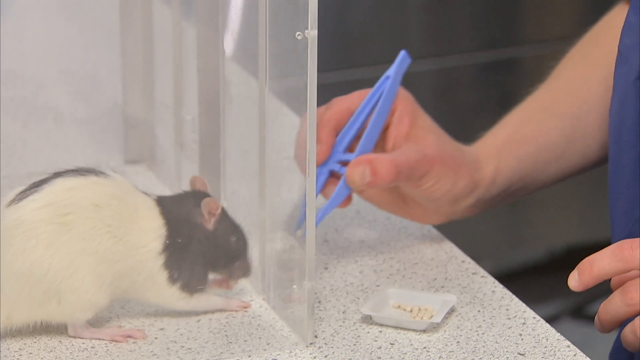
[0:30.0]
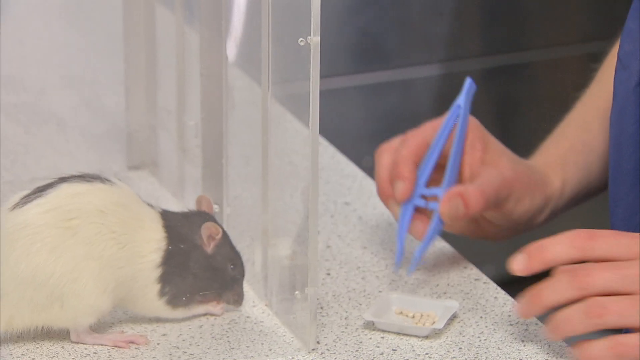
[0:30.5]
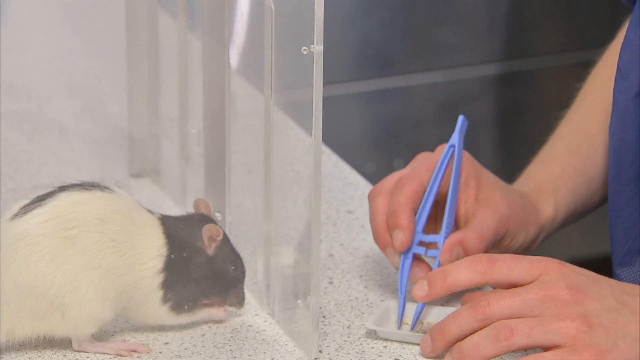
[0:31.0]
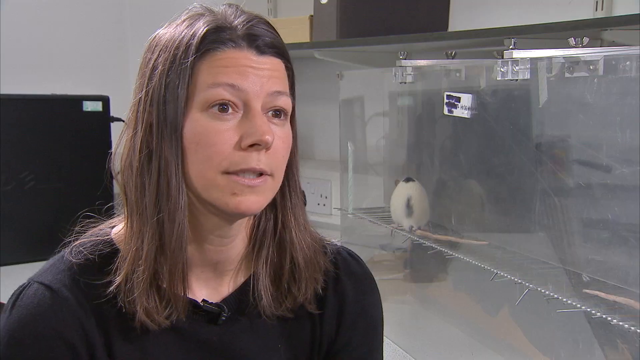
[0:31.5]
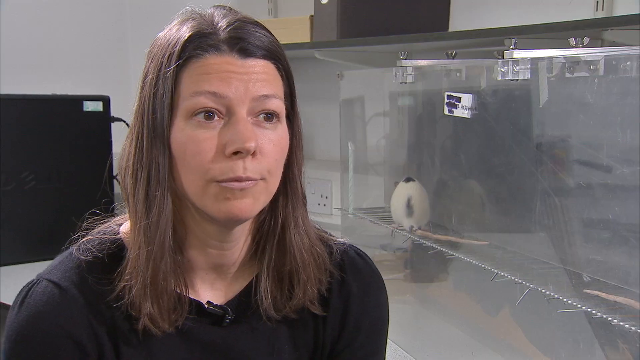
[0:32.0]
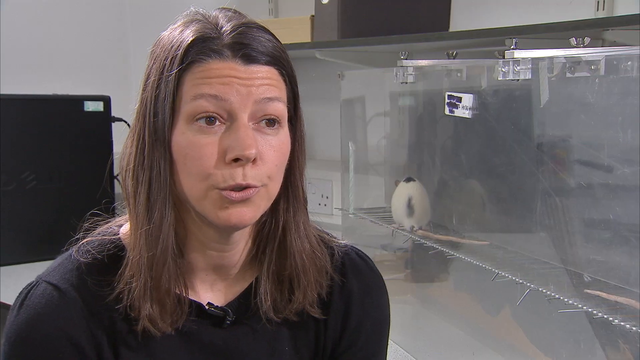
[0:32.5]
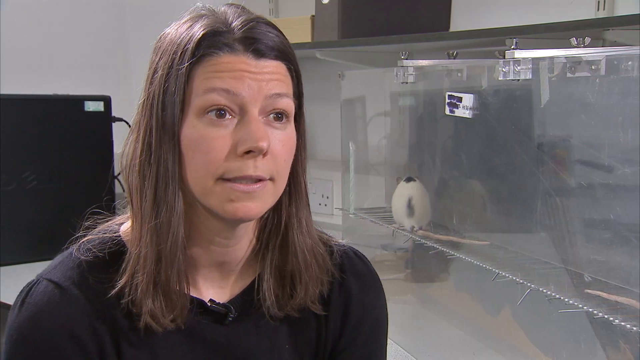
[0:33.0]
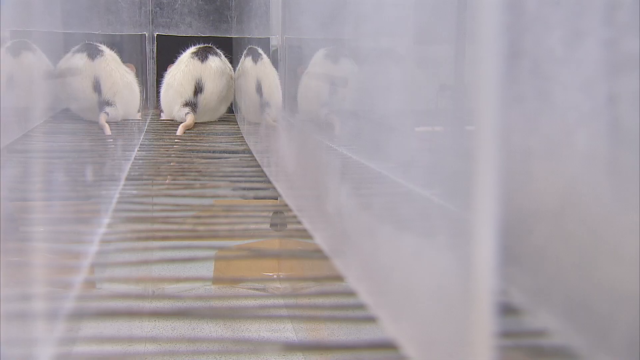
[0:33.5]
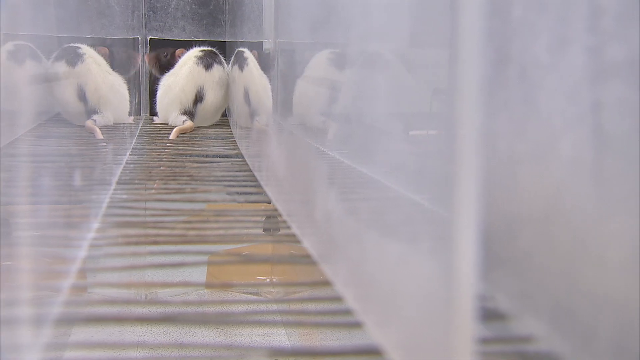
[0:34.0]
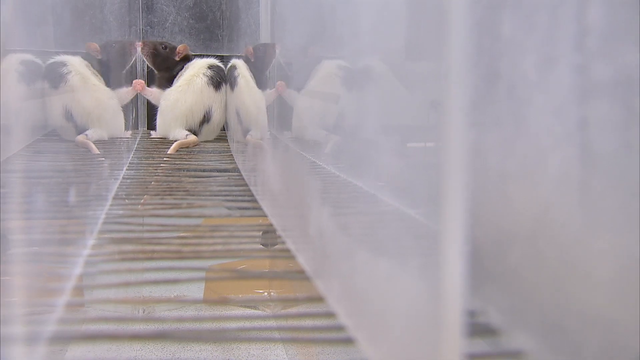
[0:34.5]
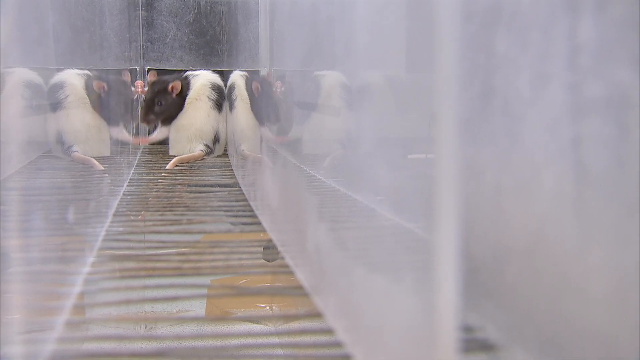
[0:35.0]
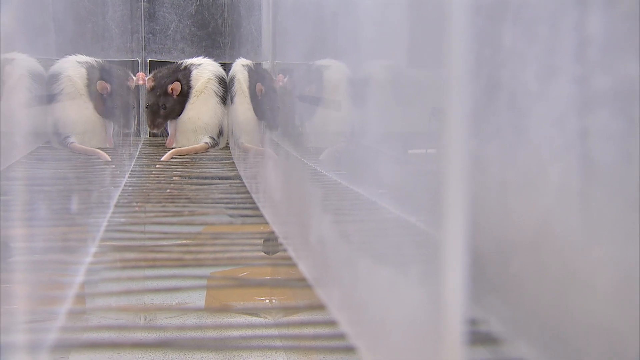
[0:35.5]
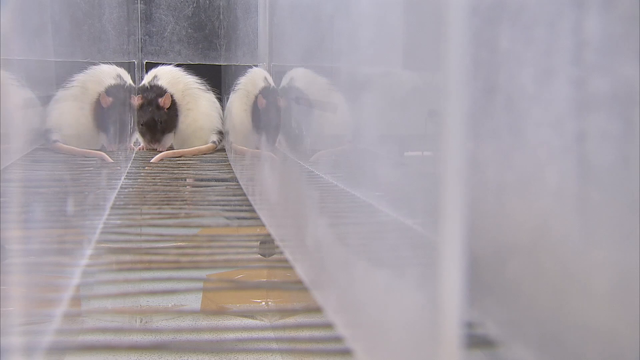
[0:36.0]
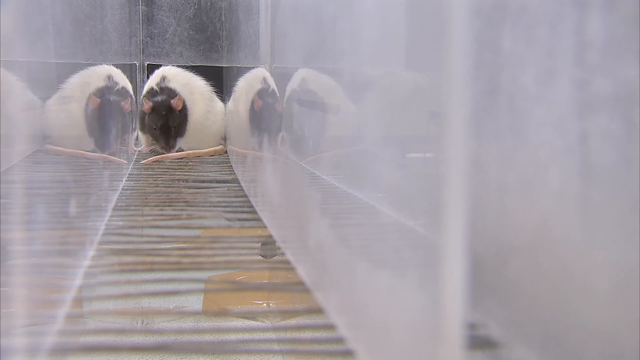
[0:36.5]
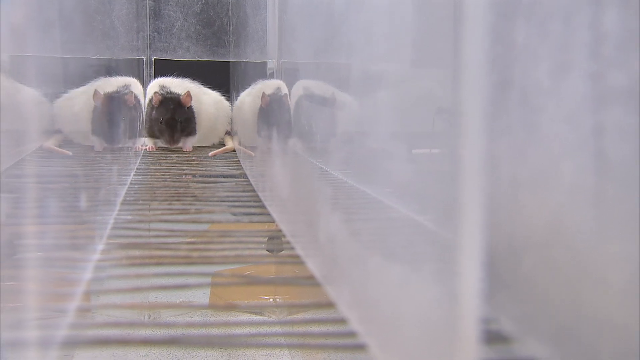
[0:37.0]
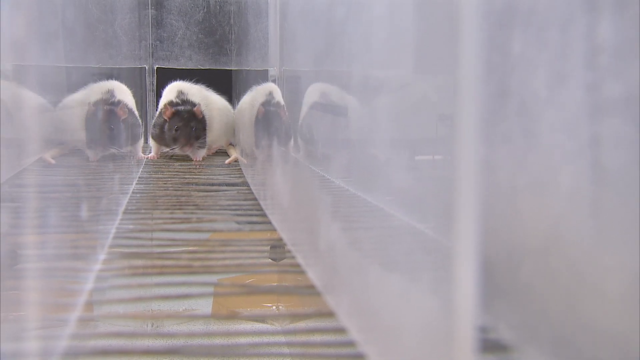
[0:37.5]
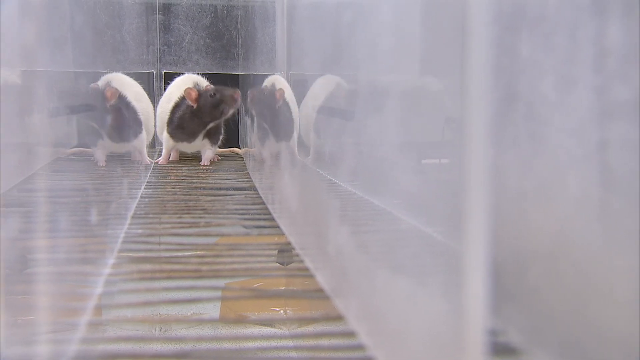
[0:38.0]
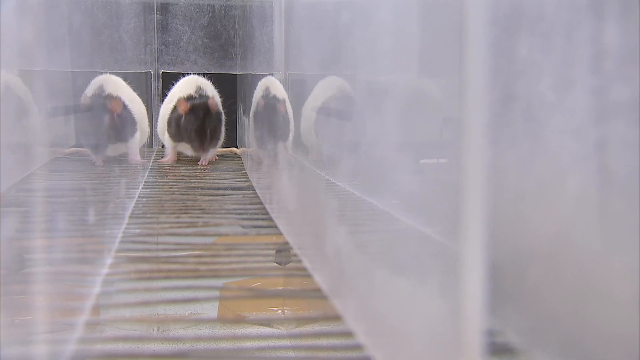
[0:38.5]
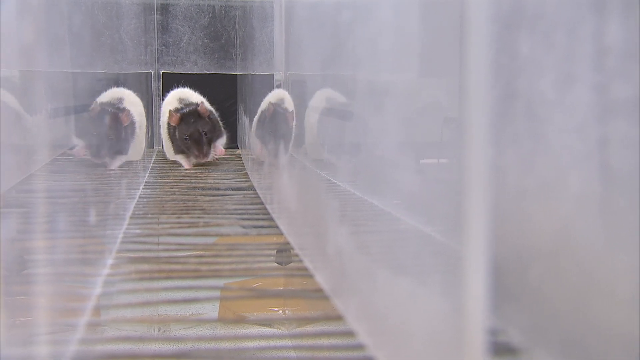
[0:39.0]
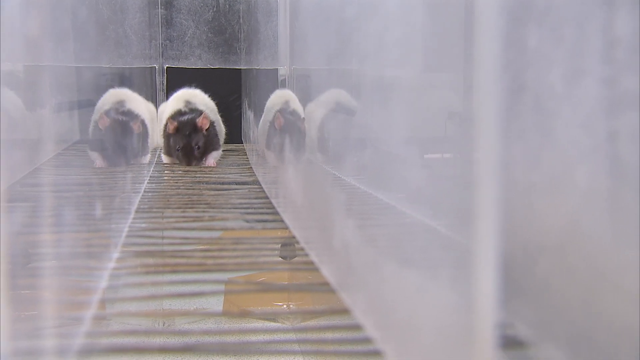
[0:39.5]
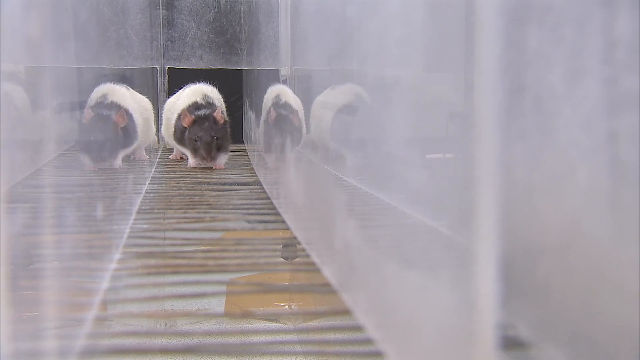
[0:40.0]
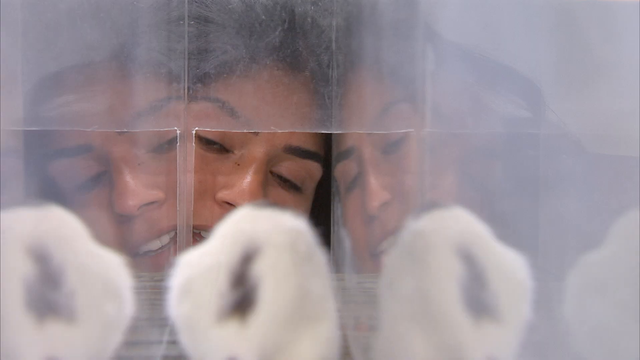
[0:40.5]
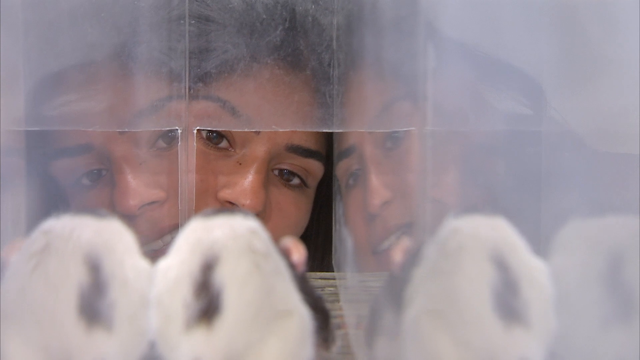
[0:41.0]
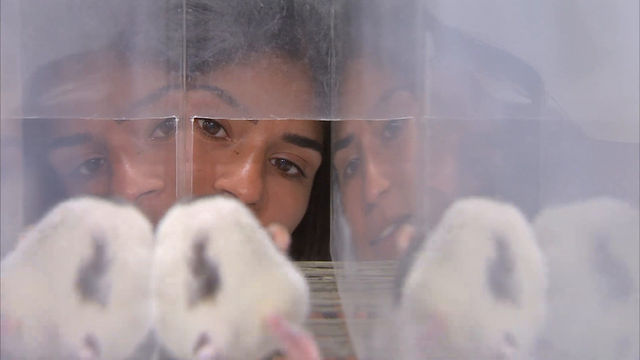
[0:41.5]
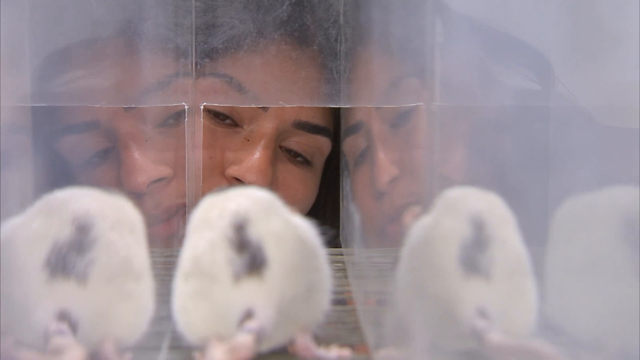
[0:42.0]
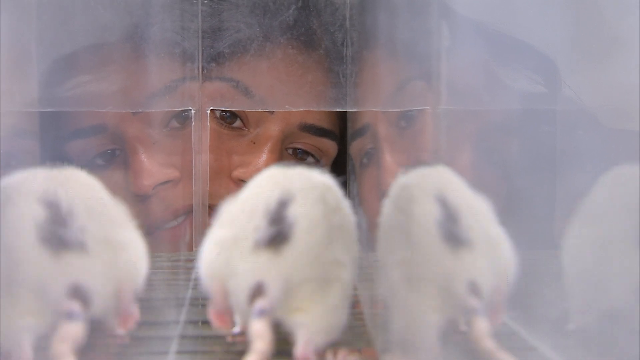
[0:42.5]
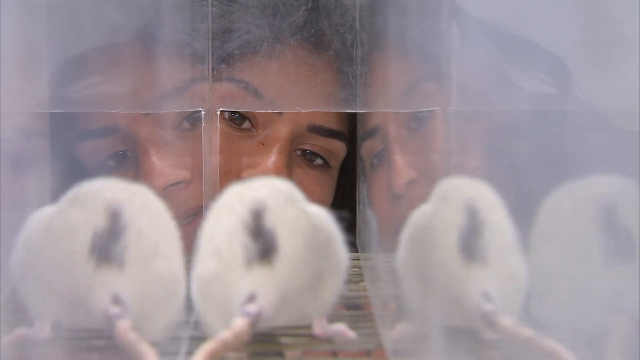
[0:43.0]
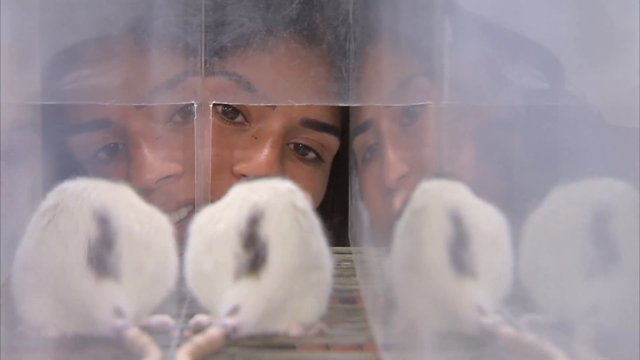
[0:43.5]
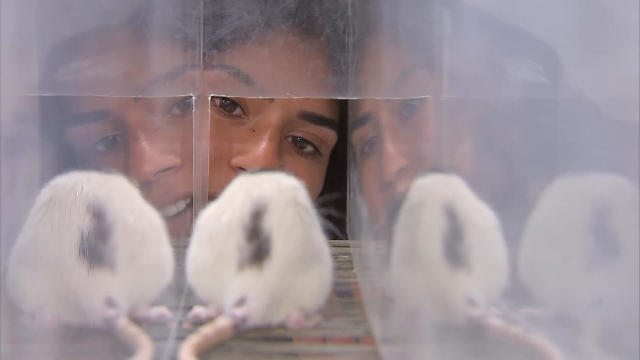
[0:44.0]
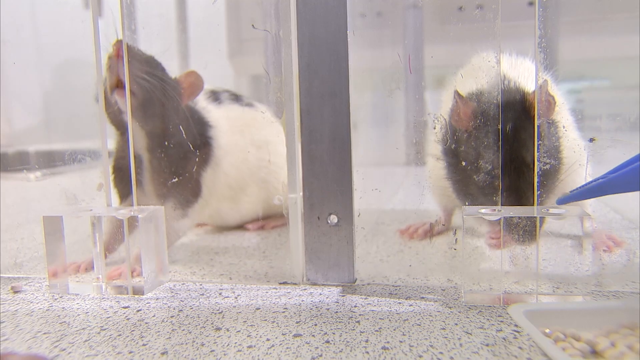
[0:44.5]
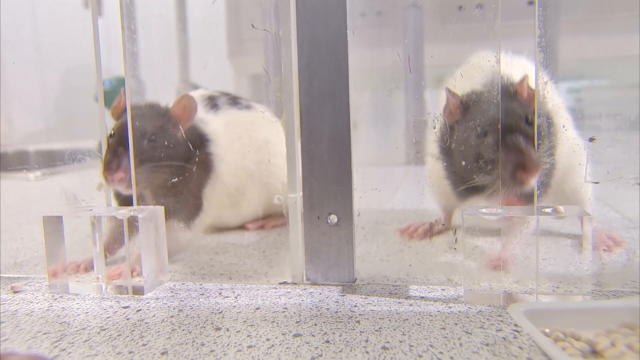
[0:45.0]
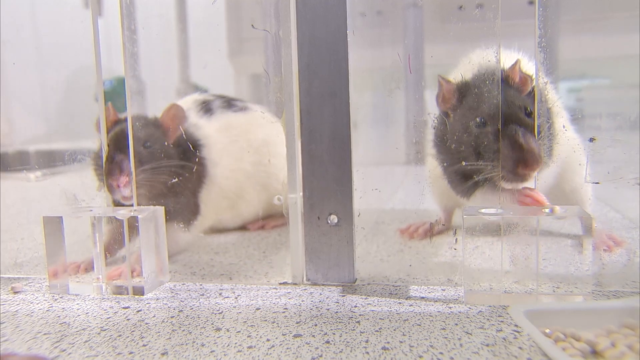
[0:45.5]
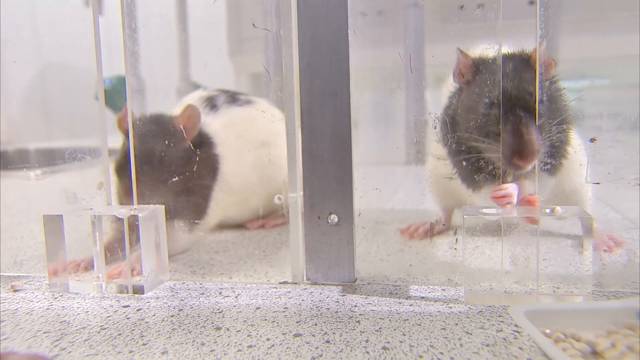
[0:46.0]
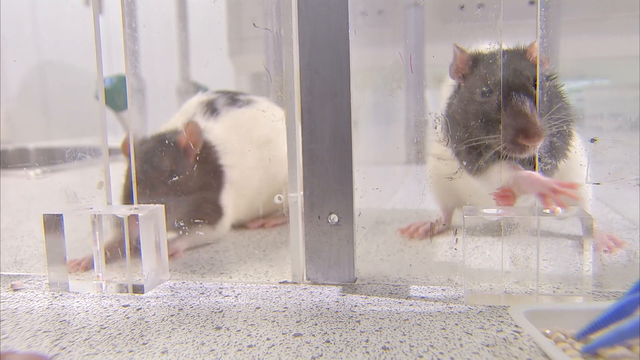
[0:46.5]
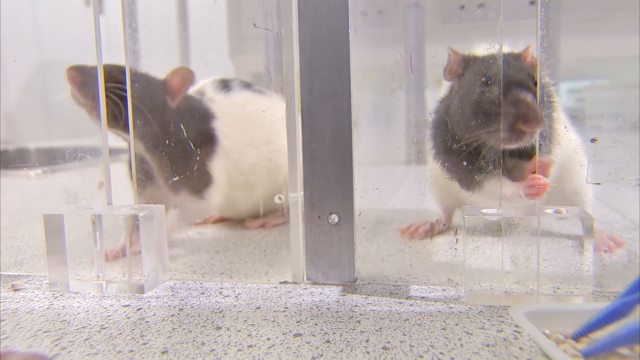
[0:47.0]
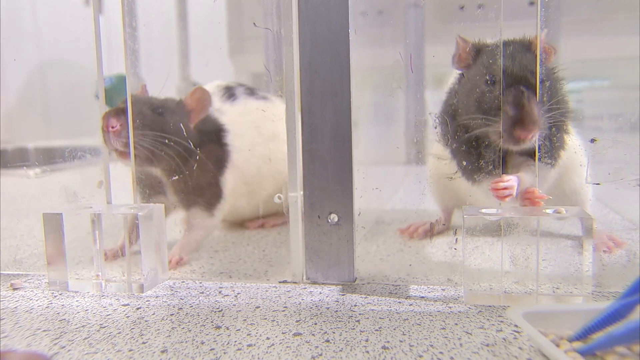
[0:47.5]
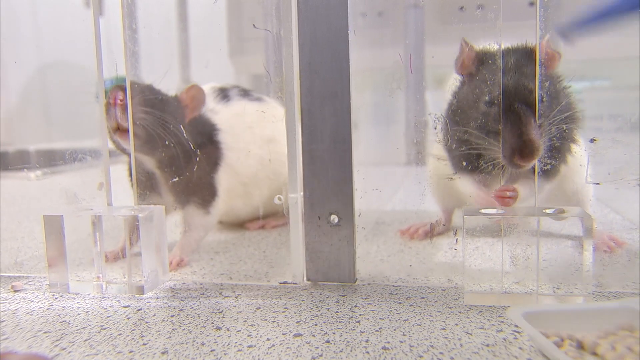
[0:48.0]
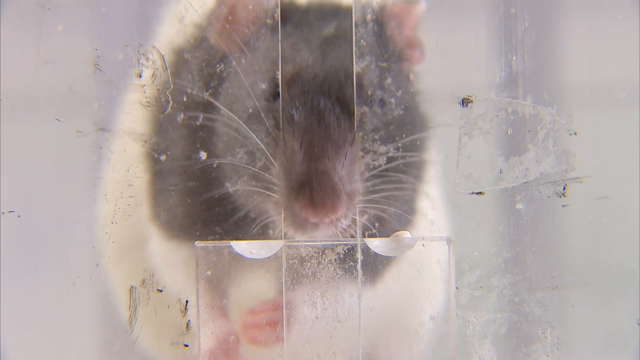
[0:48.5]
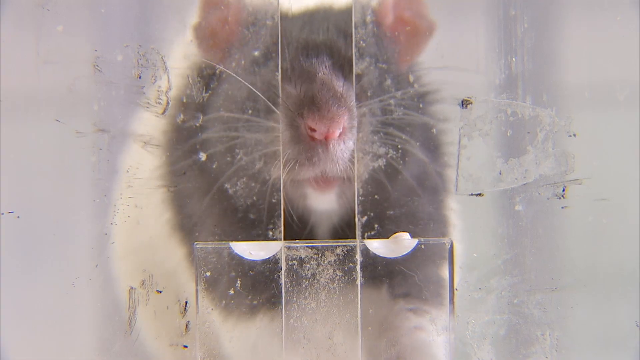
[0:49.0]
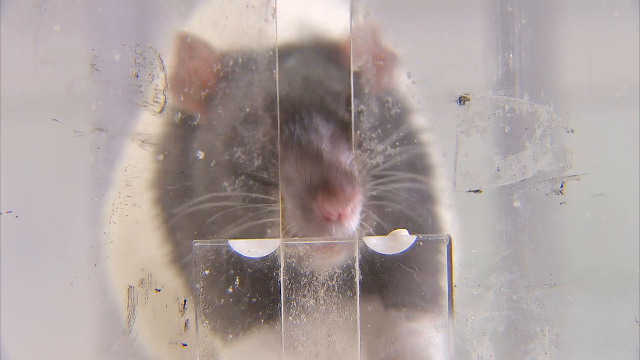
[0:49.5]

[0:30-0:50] The blonde woman in blue overalls feeds the rat. The video cuts to the brown-haired woman speaking to the camera, with a computer in the background and a plastic cage with a rat in it on its own. Next, a rat in a narrow-looking plastic cage looks around and moves slightly toward the camera. The camera then shifts to a shot of the rat facing away from the camera, looking toward a woman down the exit of the cage, and it moves slightly toward her. The video cuts to two rats being fed at the same time, side by side in separate cages of the same kind. A close-up follows of a rat's face as it tries to swipe through the gap of the cage to get the food.